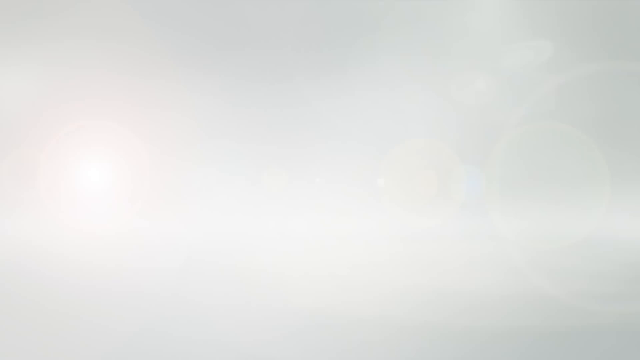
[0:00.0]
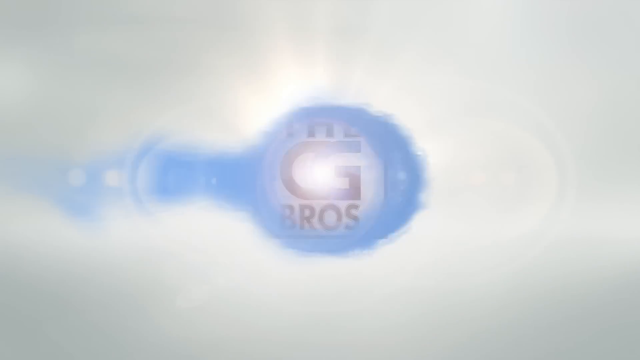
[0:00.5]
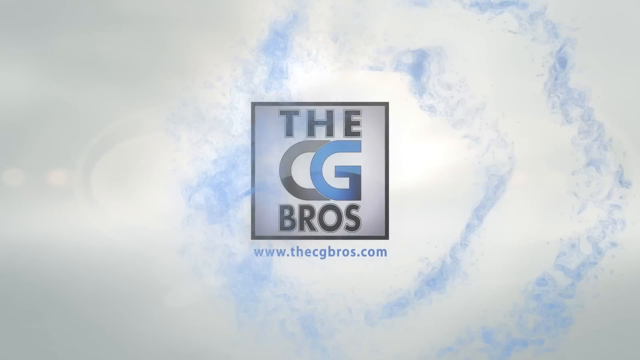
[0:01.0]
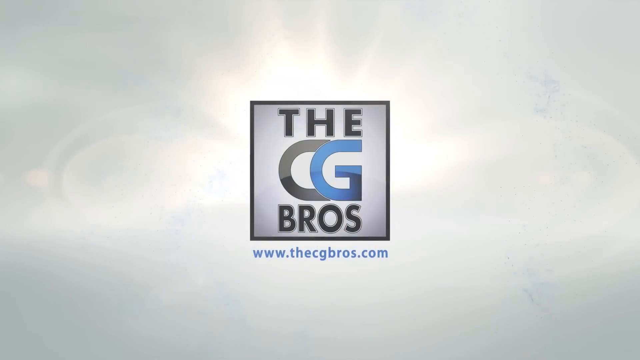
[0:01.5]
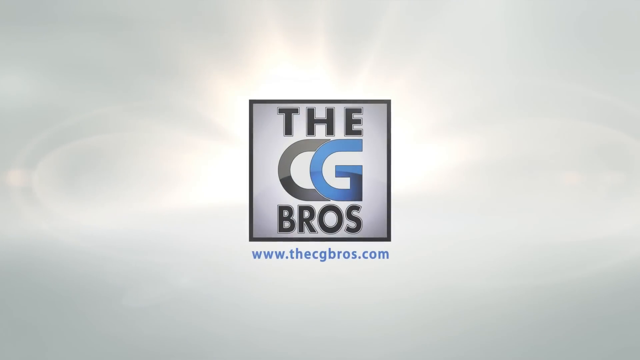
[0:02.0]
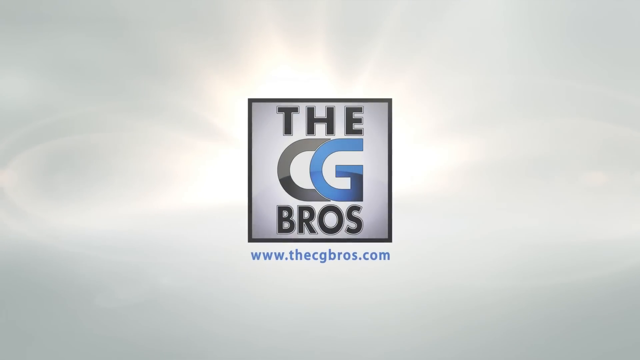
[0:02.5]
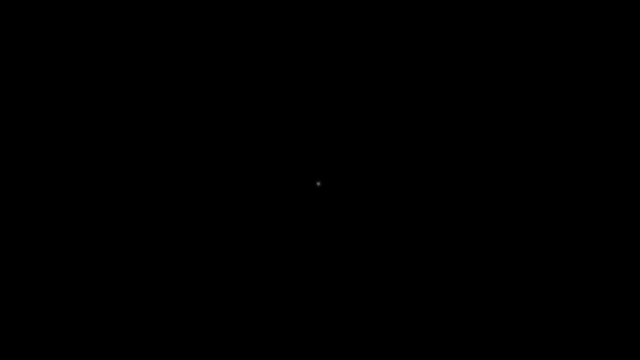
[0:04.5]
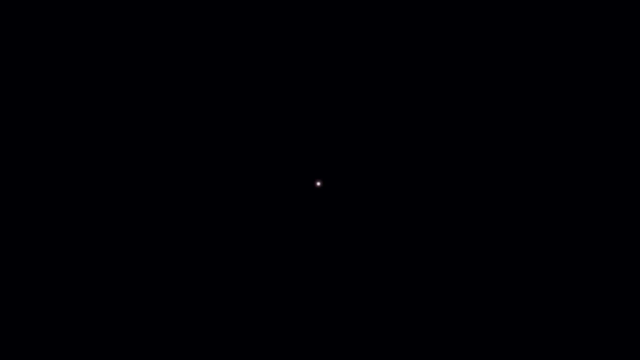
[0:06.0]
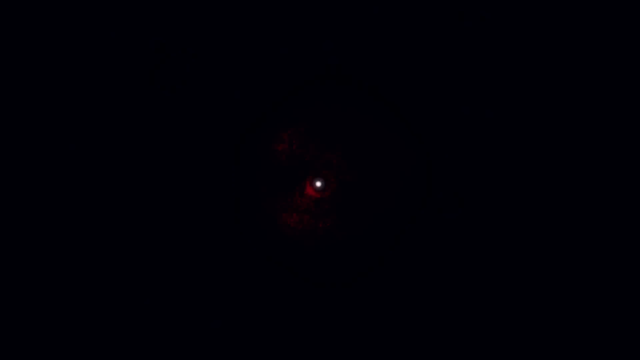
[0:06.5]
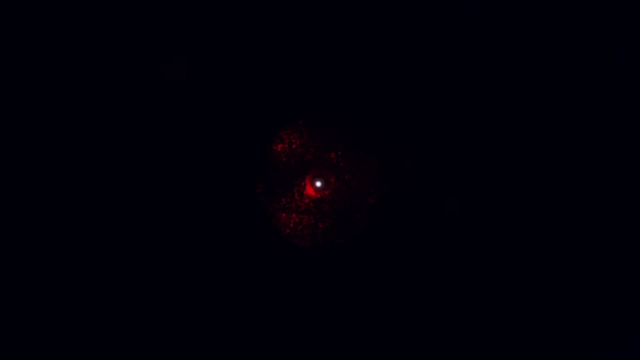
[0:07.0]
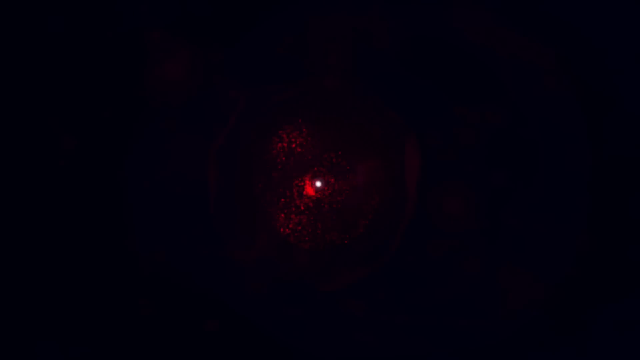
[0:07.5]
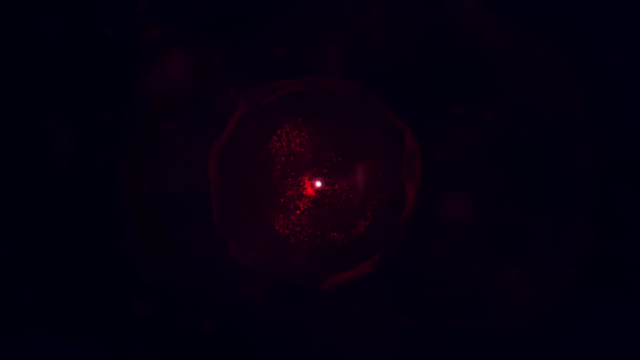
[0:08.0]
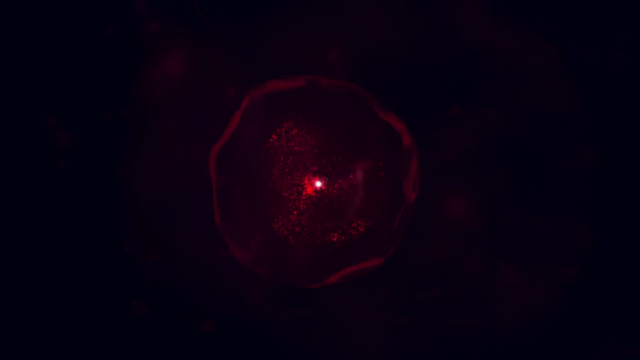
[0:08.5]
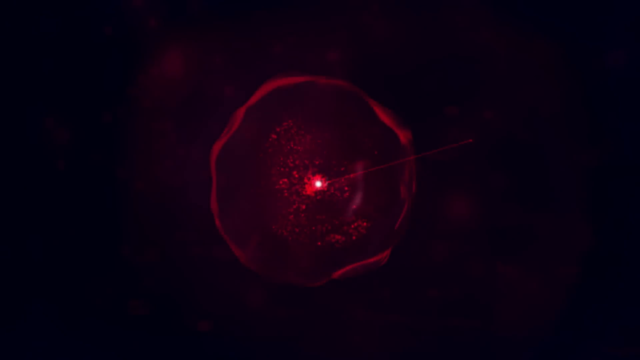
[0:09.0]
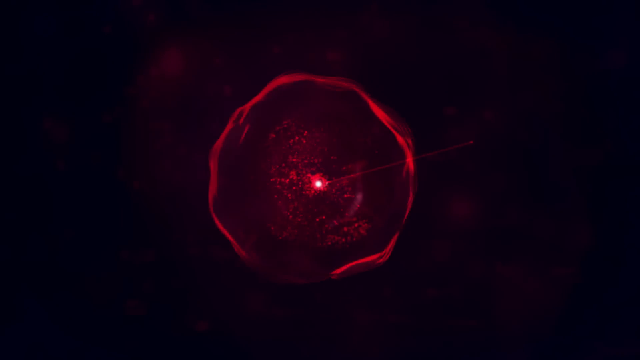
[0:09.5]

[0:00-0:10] At the beginning the whole page is white, and then blue colors shoot in from the left. A box pops up that says "the CG Bros" and "www.thecgbros.com". Next the screen is all black, with a flashing little white dot in the middle. Something red that almost looks like a jellyfish floats in the background; it is kind of circular but not totally, glowing almost like an orb against the black background. The shining white dot in the middle is surrounded by more red, then hazy red, and the shape is almost outlined in red.